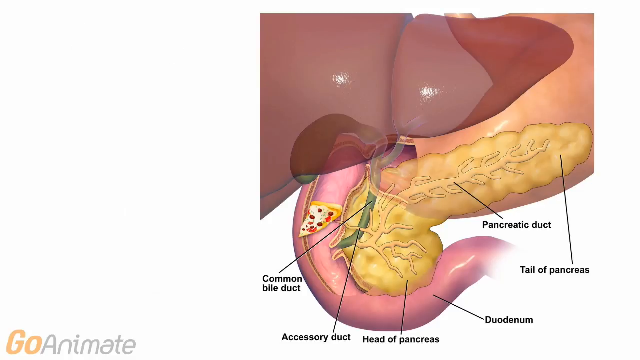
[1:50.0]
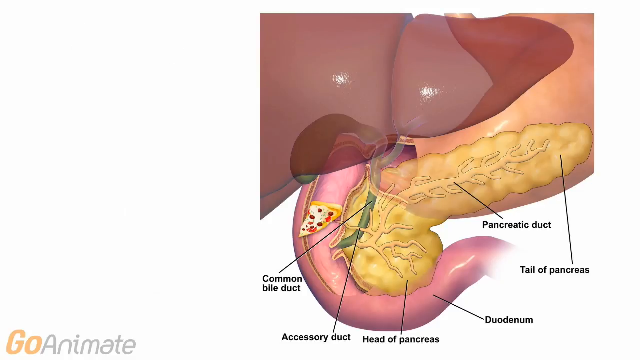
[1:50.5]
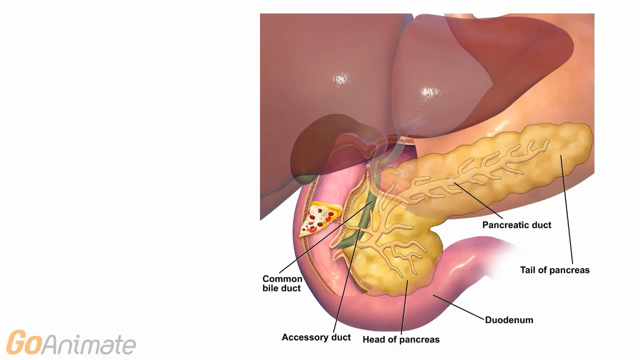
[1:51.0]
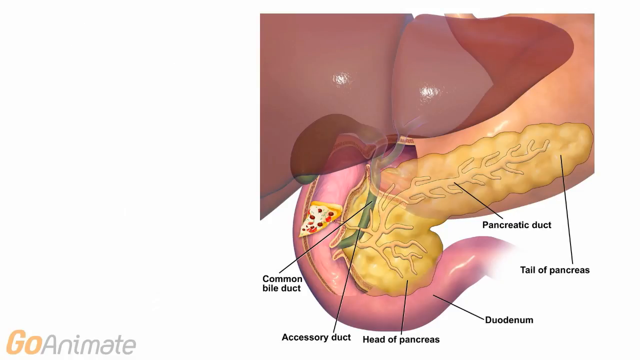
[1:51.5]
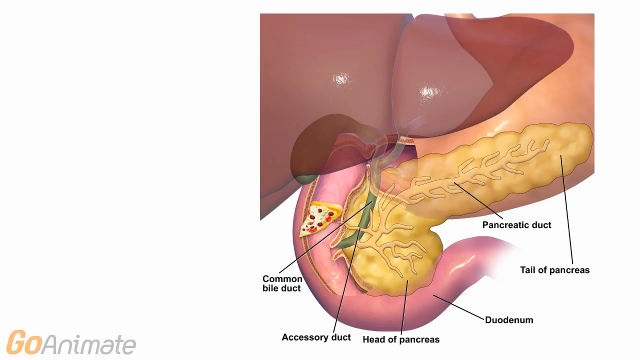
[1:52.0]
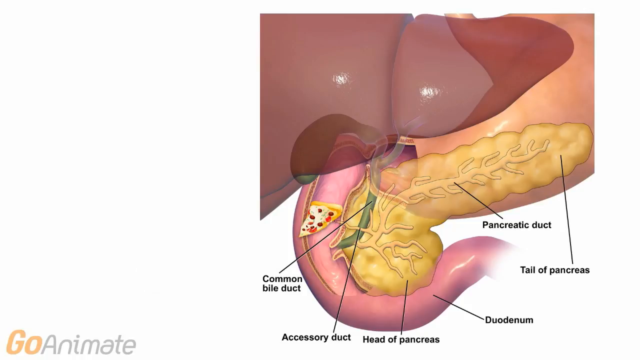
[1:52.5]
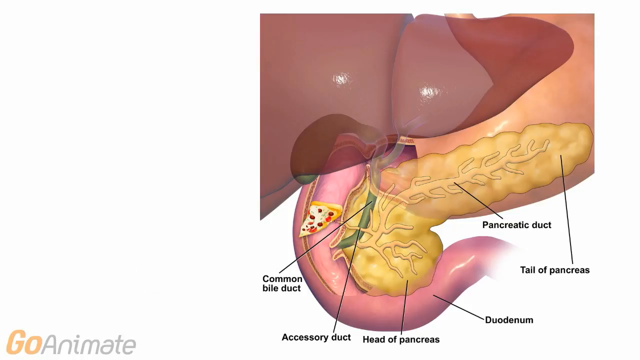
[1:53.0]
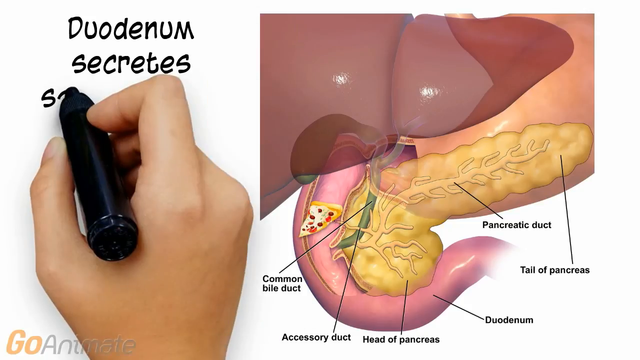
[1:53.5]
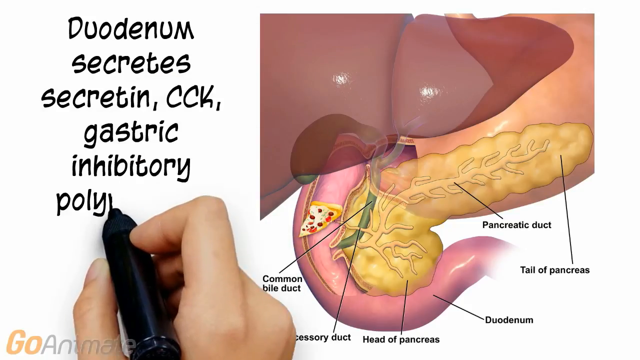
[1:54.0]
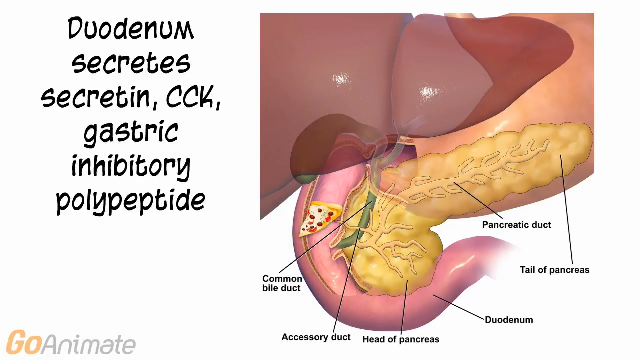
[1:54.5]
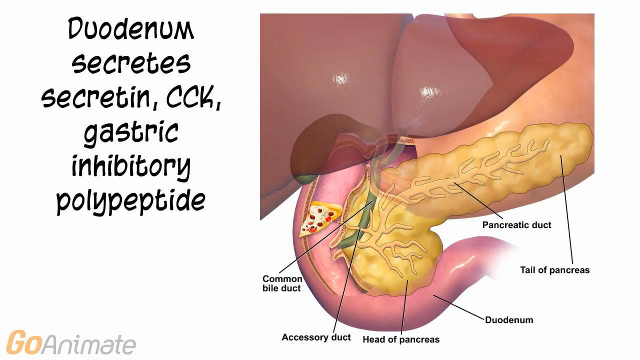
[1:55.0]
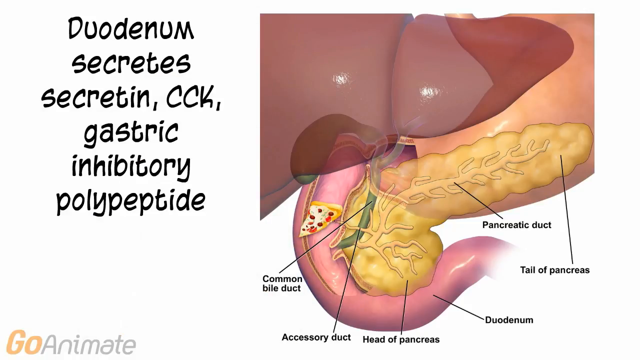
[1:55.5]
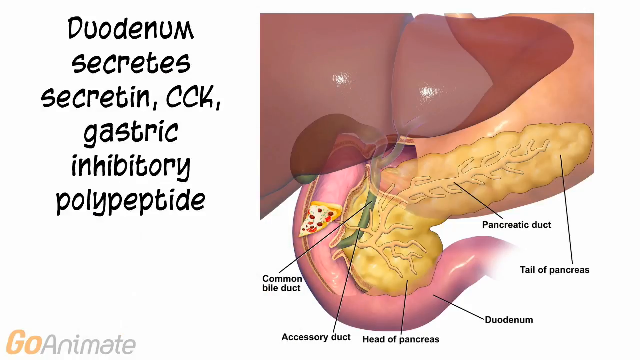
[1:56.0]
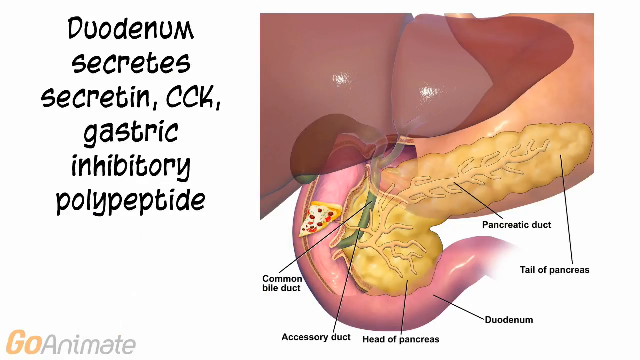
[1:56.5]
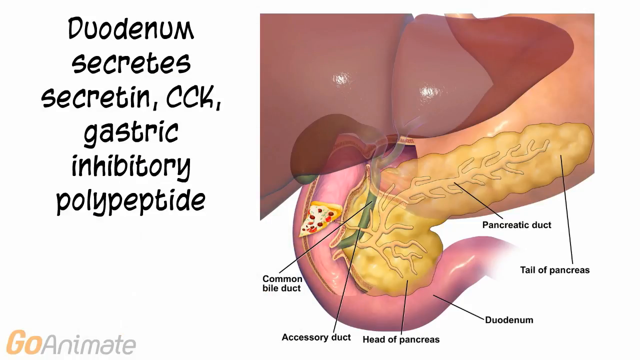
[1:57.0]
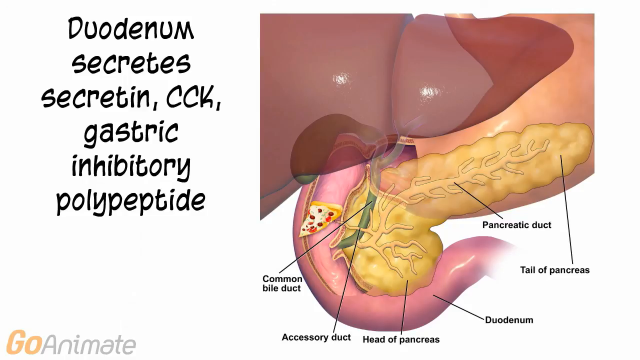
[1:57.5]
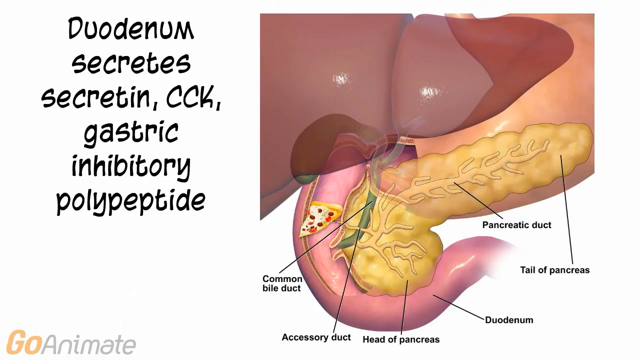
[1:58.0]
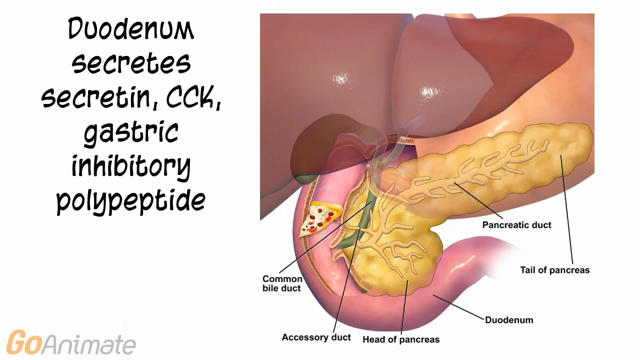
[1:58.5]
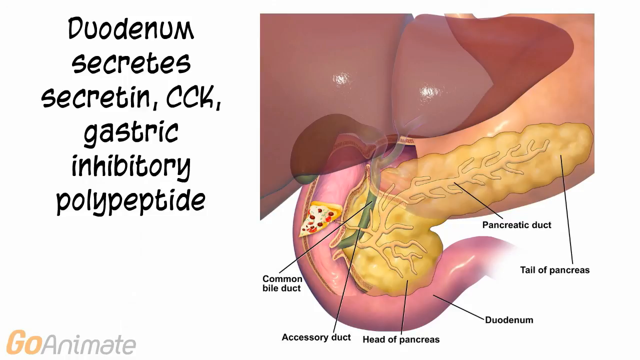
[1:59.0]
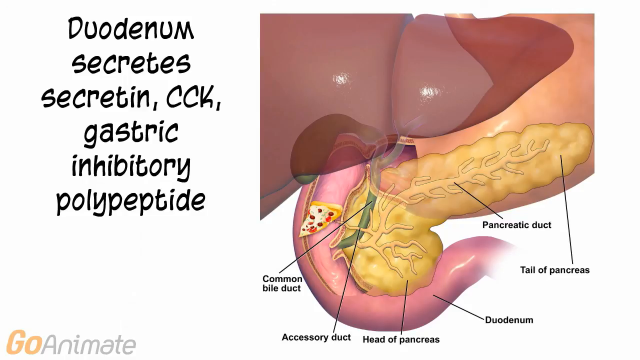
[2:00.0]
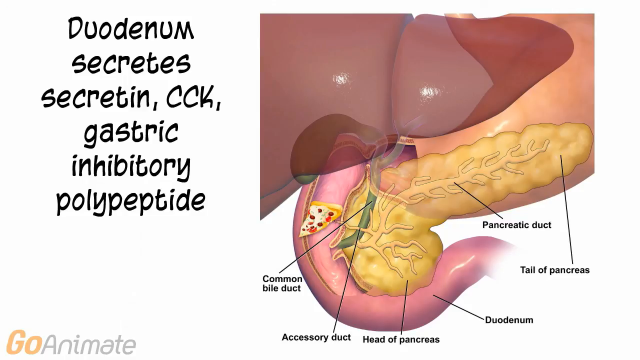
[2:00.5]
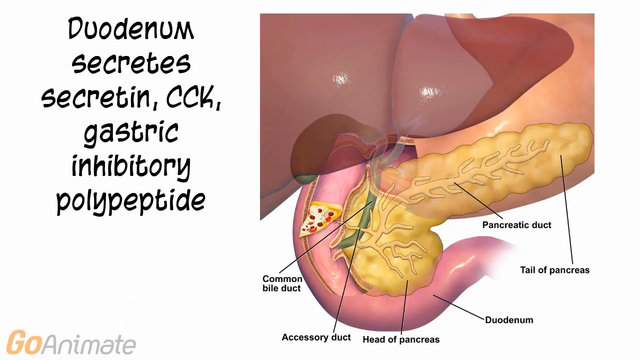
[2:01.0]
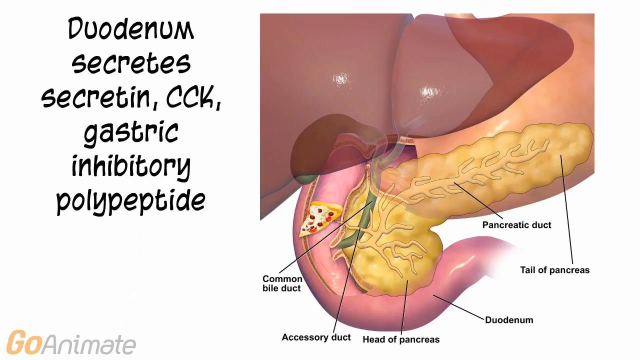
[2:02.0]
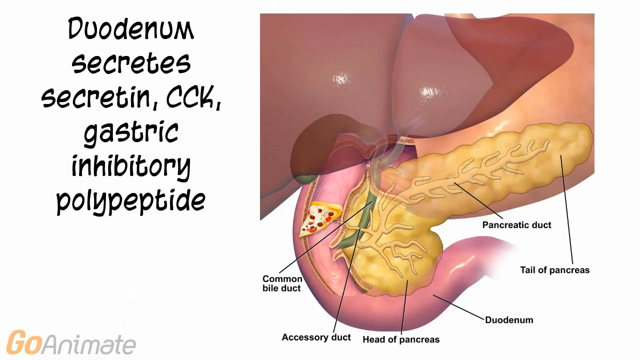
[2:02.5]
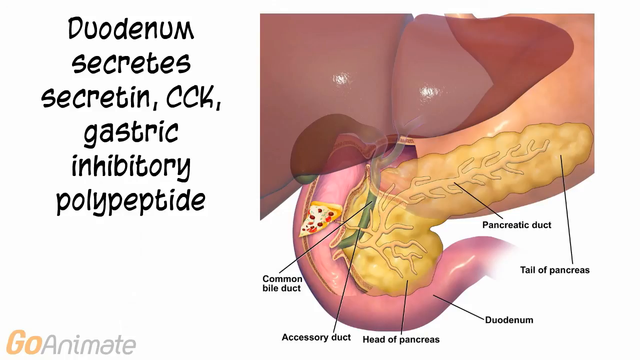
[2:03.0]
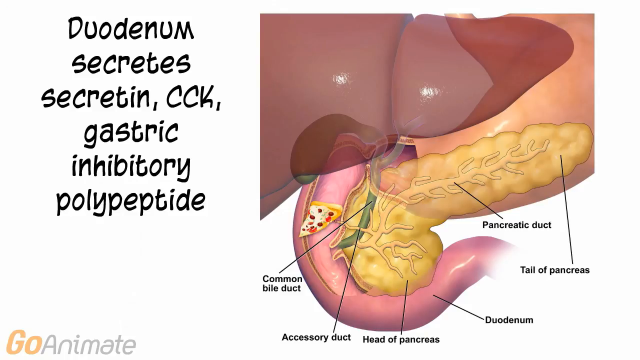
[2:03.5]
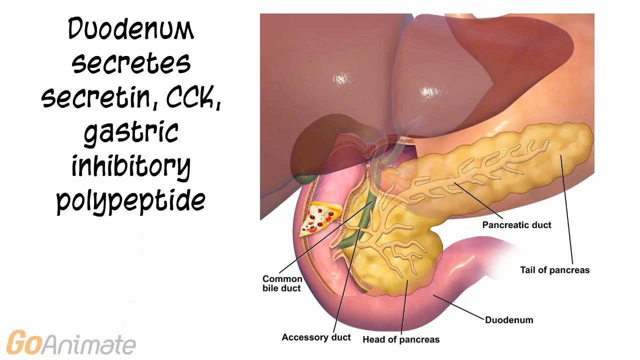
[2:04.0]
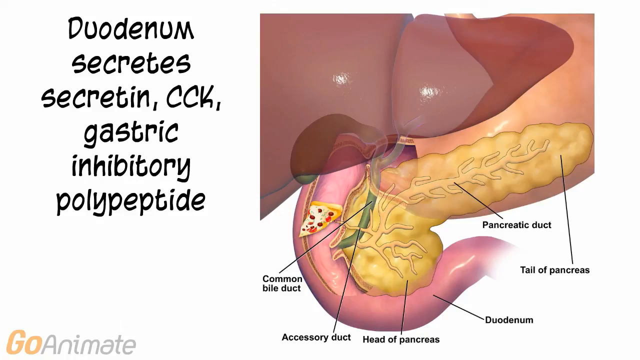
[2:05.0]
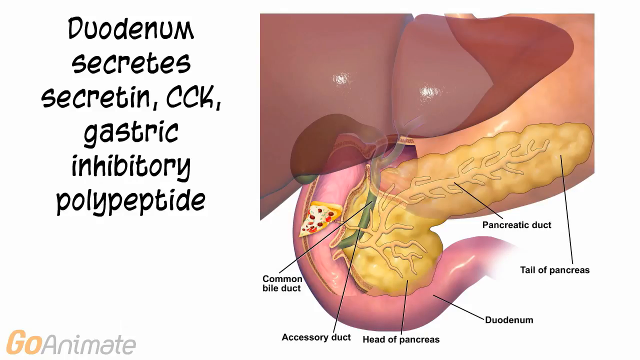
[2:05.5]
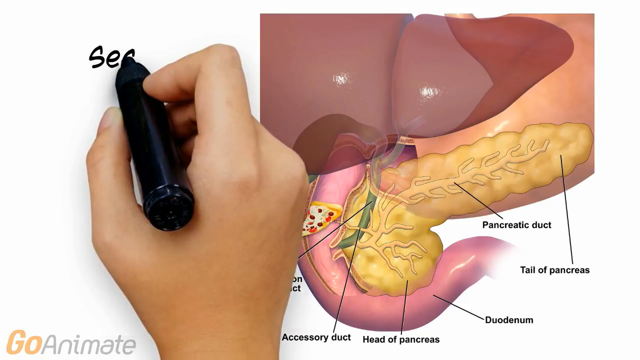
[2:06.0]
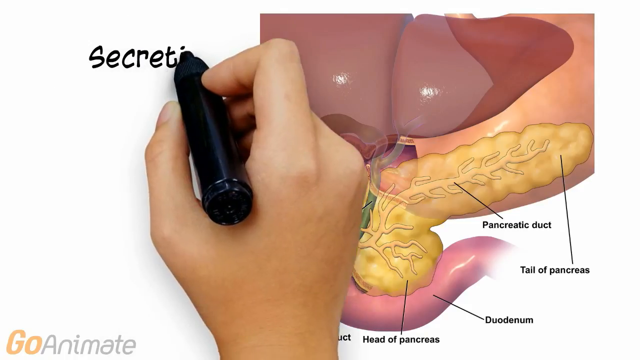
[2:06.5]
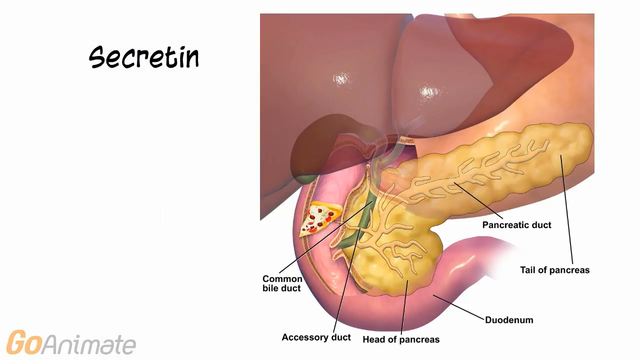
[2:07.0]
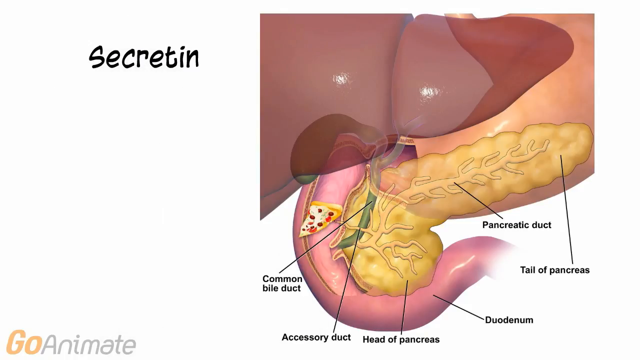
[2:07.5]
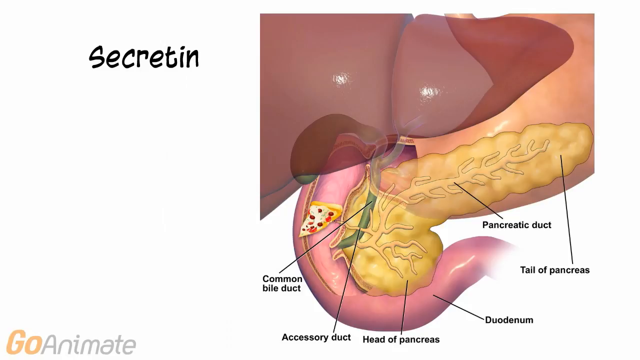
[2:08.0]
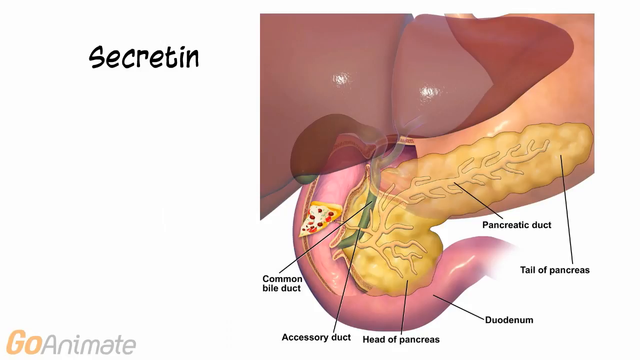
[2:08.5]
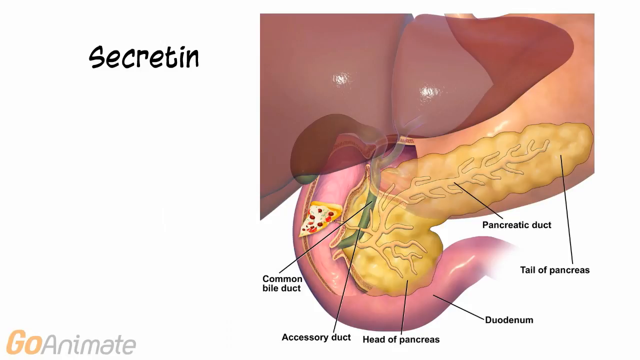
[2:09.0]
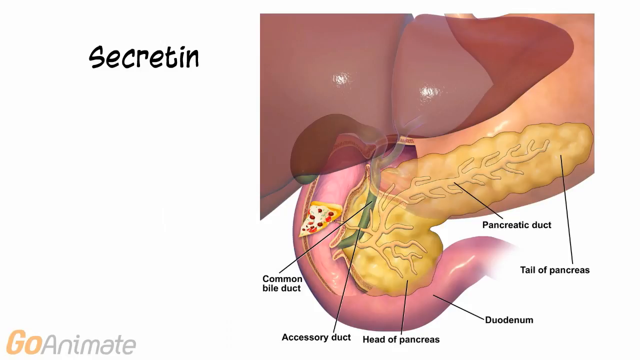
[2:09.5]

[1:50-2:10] The labeled, detailed image of the pancreas is still shown. Written on the side is "duodenum secretin cck gastric inhibitory polypeptide," and then "secretin" is shown written by itself on the side. The detailed image of the pancreas area is labeled with the common bile duct, the pancreatic duct, the tail of the pancreas and the duodenum, among other areas, and is colored in detail. A piece of pizza is visible inside the pancreas. Colors in the image include yellow, pink, a dark reddish color and a kind of tannish orange, as well as a green stem, against a white background.